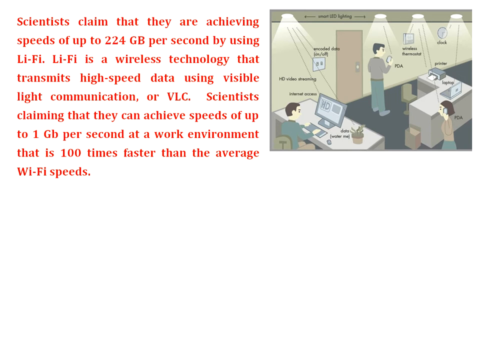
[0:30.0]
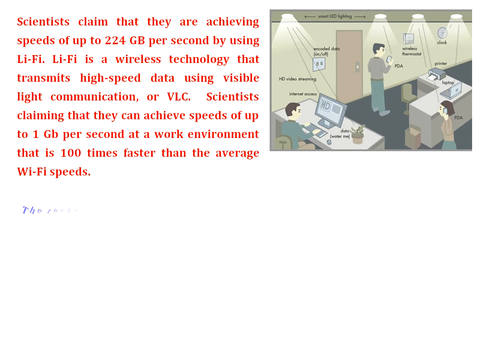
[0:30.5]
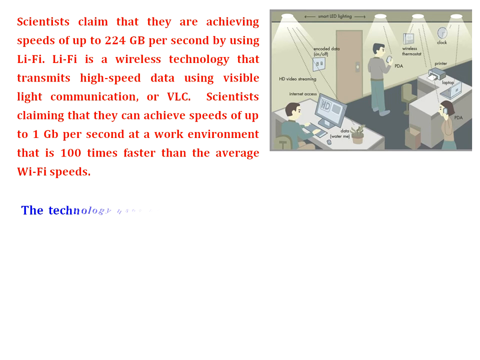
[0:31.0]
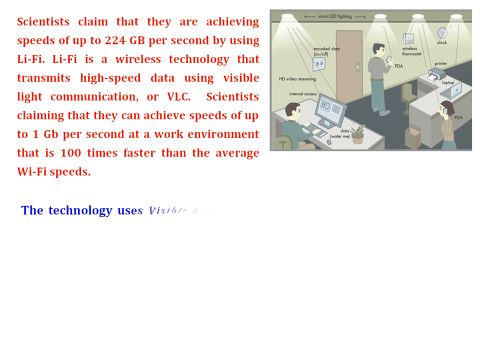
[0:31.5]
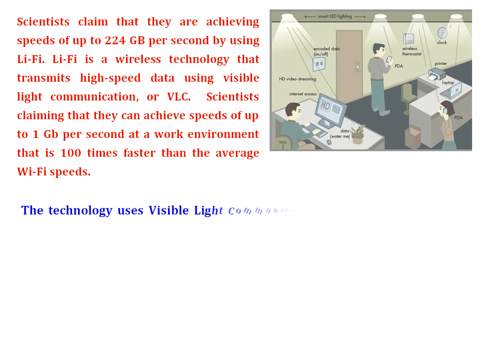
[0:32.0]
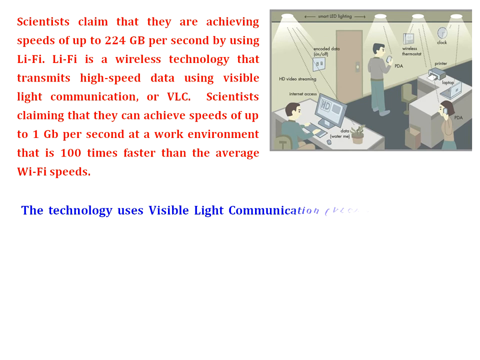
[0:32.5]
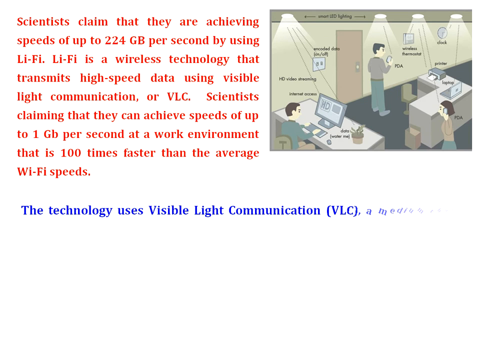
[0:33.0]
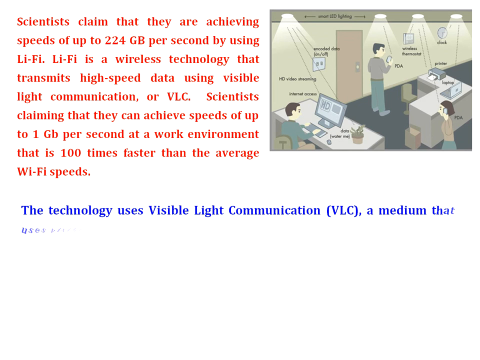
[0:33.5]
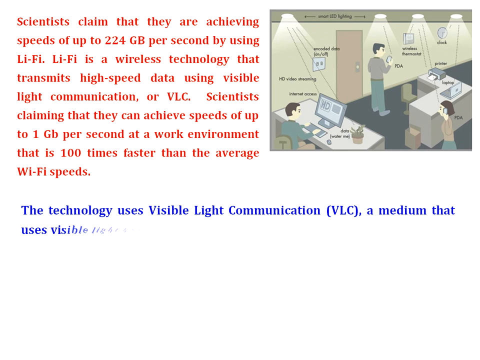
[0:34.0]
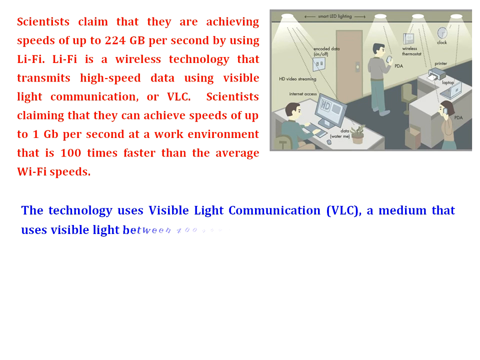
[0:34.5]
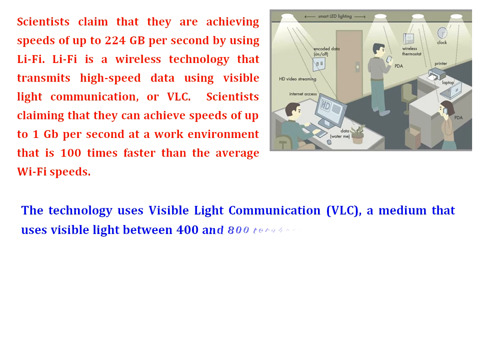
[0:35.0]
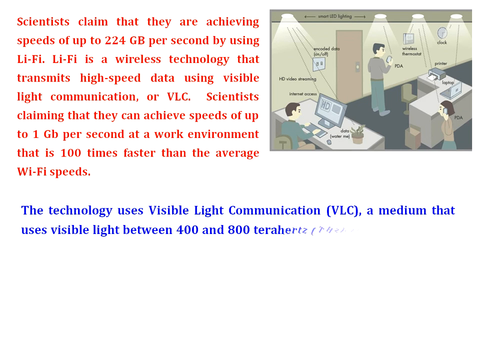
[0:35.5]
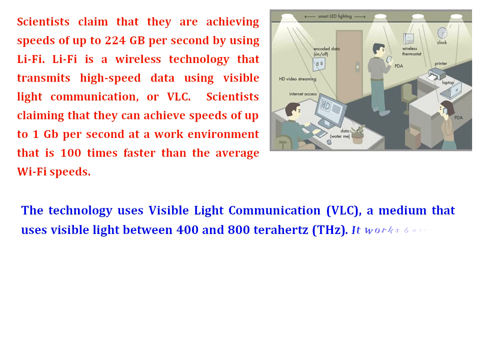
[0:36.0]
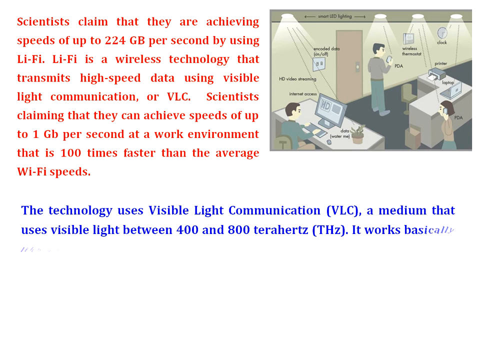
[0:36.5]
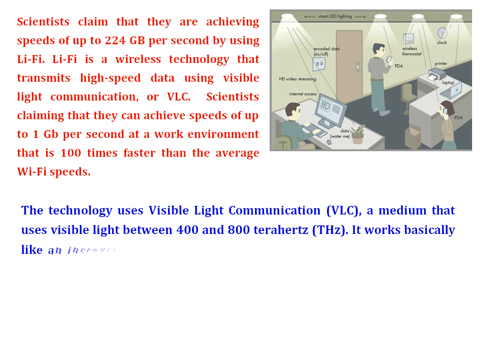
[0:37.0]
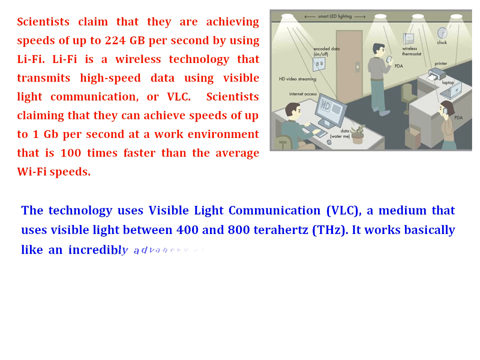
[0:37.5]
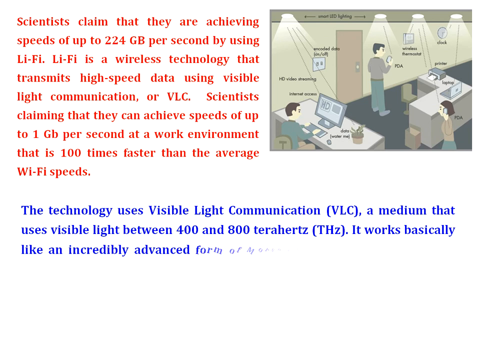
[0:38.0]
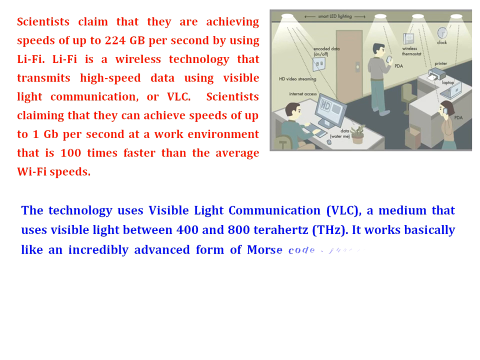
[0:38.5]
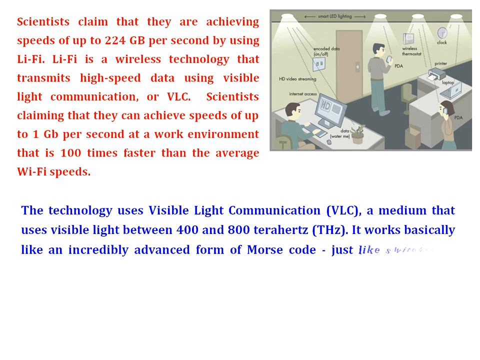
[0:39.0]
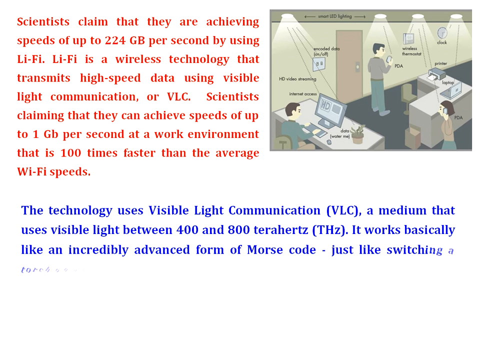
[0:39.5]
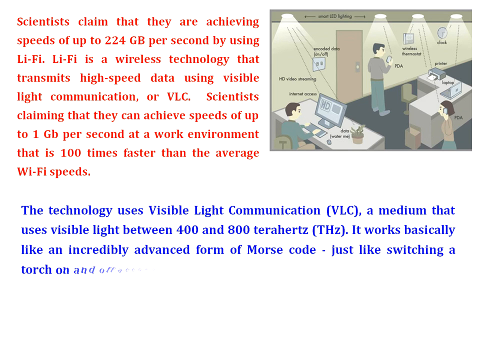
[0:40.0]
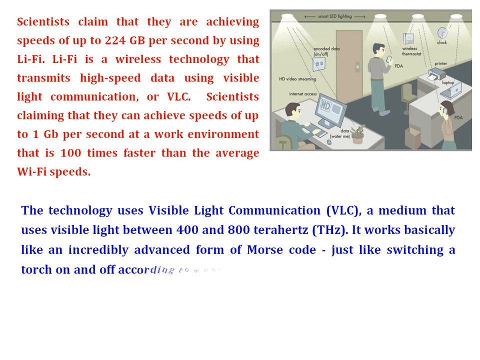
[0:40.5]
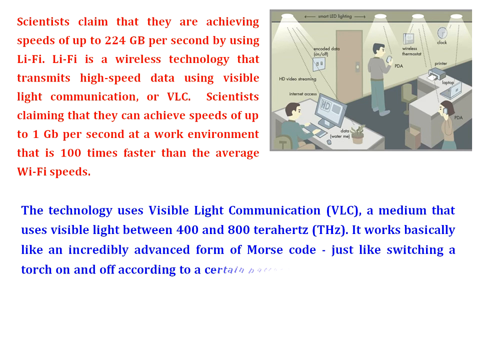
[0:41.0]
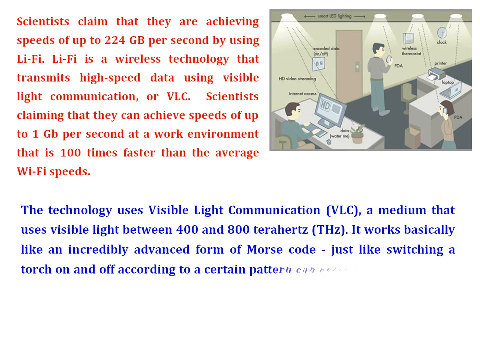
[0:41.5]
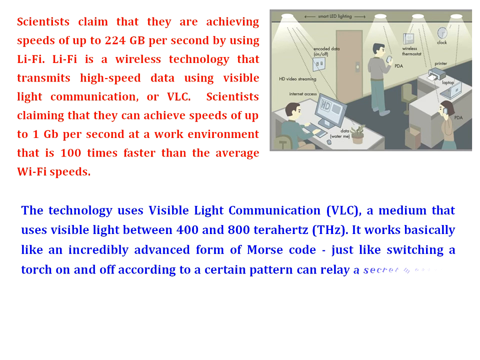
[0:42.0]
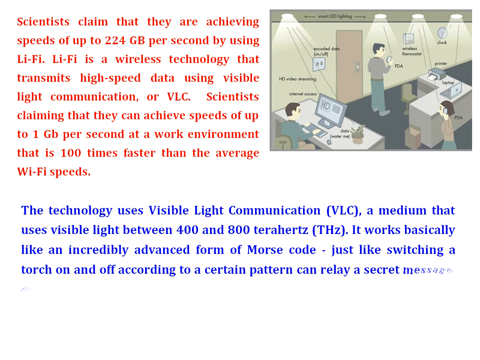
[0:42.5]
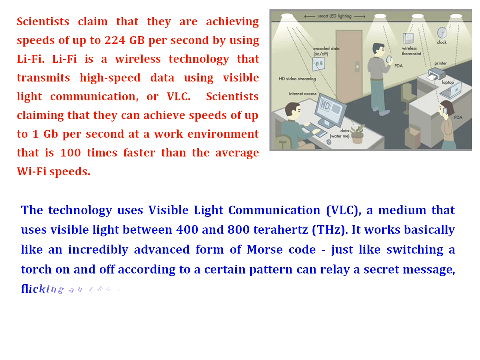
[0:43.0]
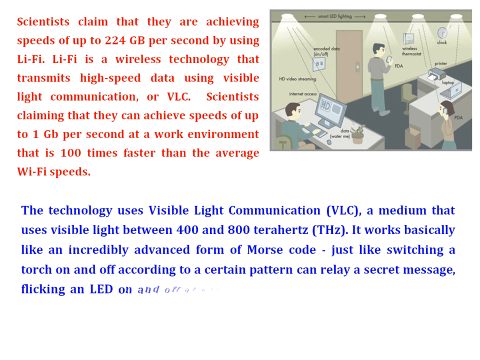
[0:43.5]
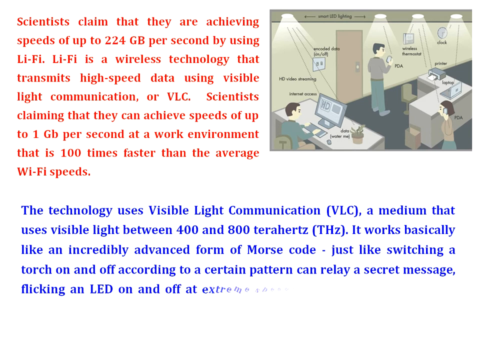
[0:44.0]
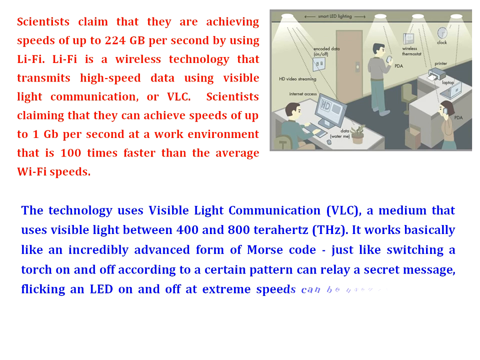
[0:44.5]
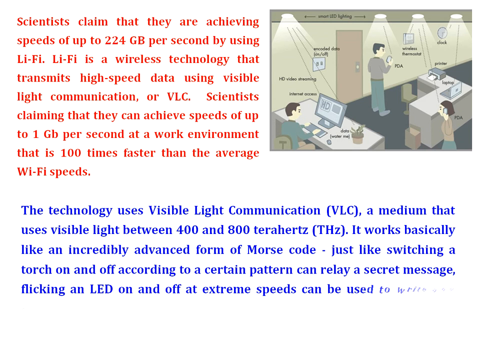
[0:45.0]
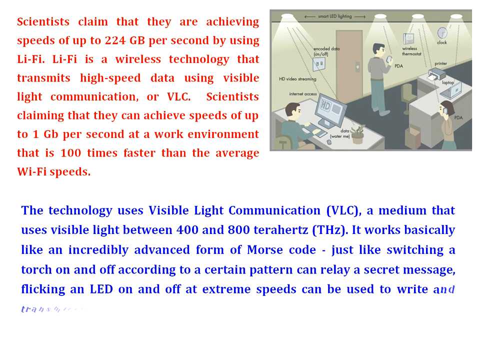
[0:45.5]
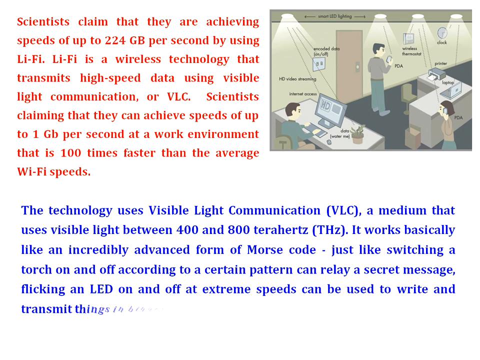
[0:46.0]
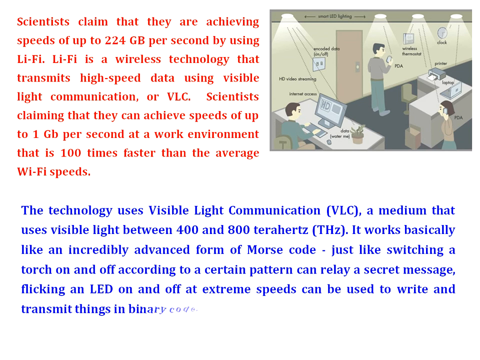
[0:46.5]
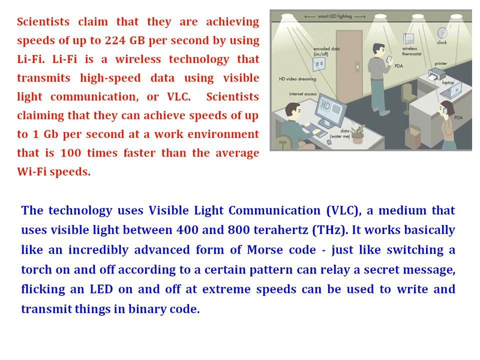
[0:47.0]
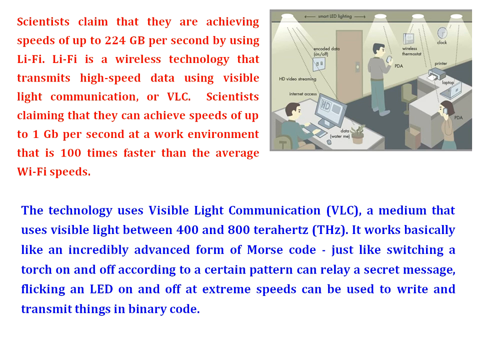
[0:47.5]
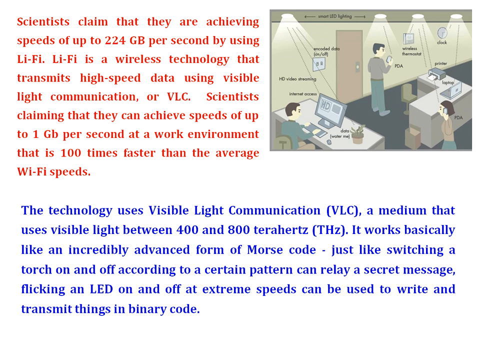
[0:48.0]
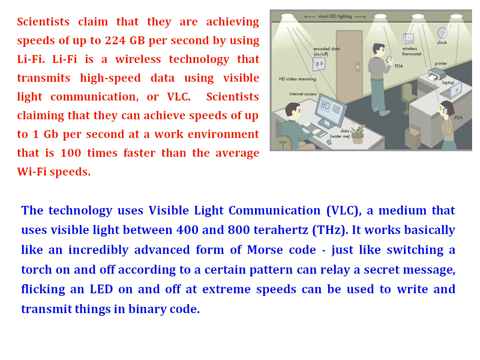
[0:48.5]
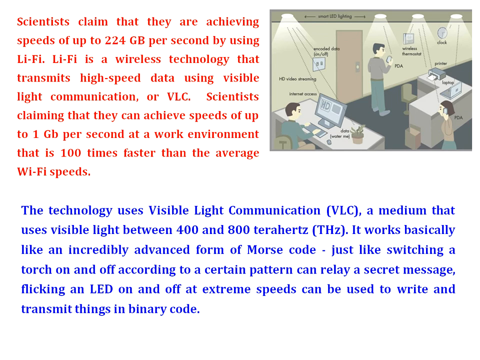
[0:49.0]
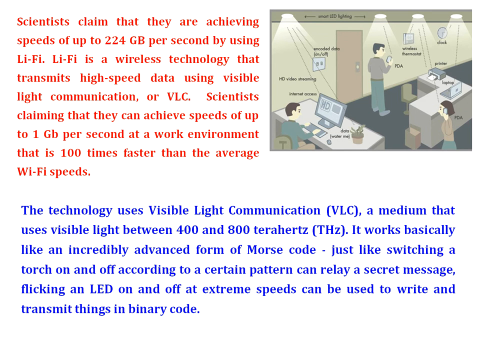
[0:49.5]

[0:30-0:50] Male and female cartoon-like people are in what seems to be an office-like workspace, with one male sitting in front of a computer. They are maybe wearing green tops with green bottoms. There is a light, a desk and a towel.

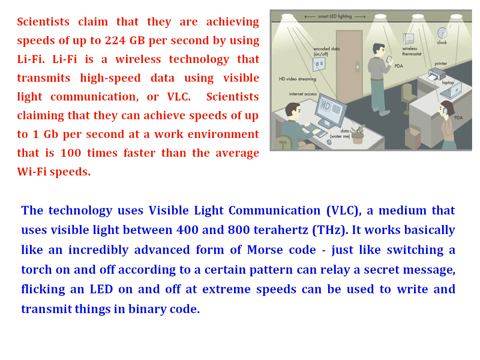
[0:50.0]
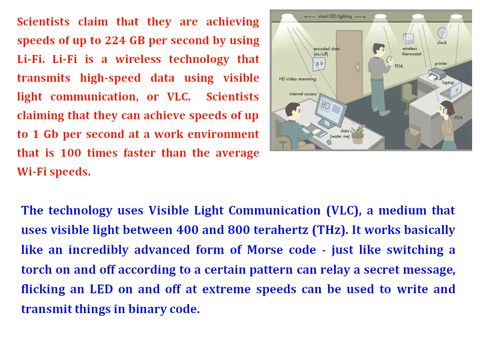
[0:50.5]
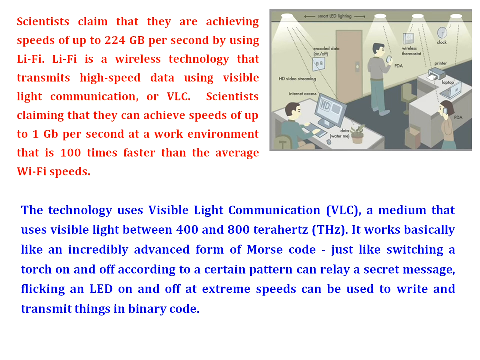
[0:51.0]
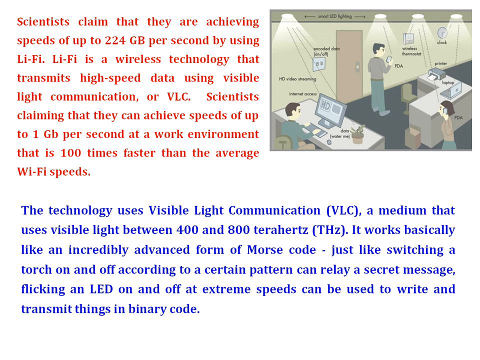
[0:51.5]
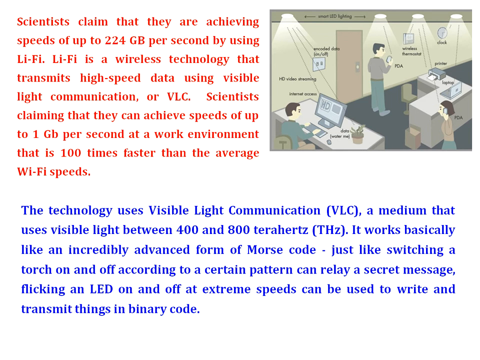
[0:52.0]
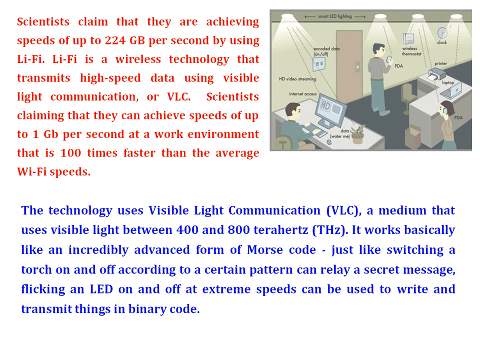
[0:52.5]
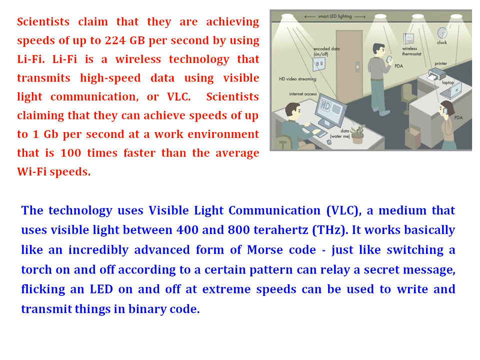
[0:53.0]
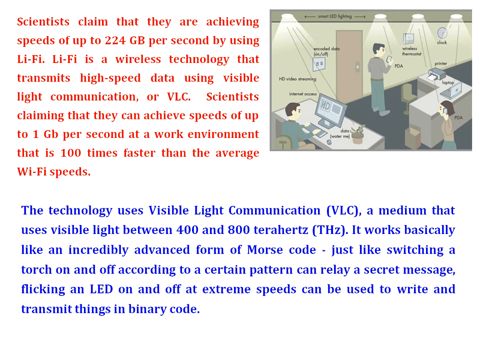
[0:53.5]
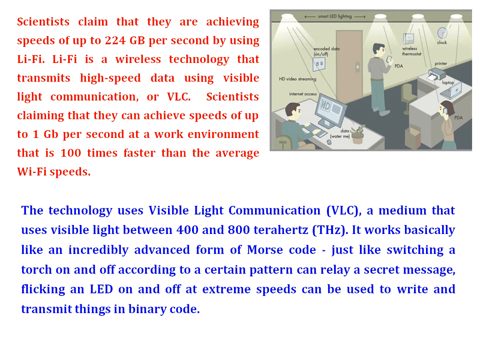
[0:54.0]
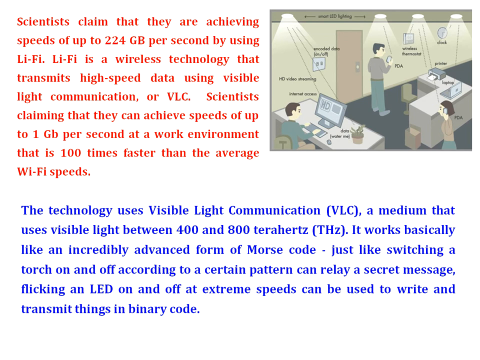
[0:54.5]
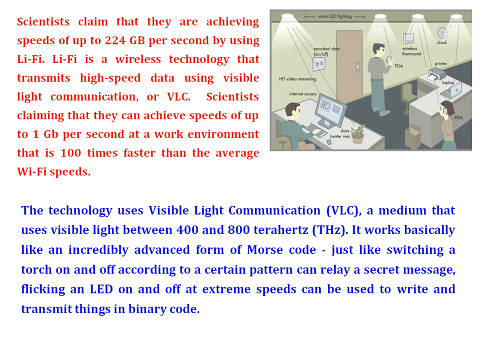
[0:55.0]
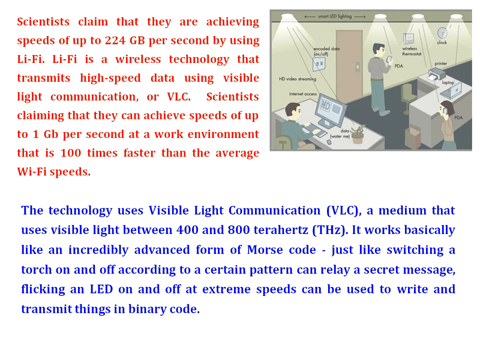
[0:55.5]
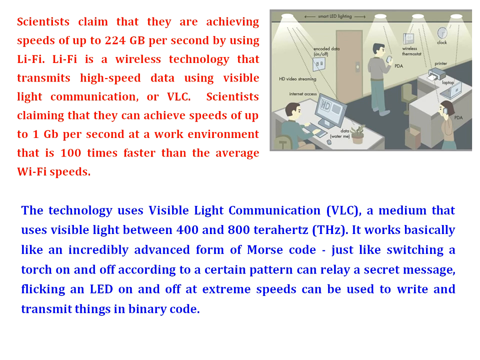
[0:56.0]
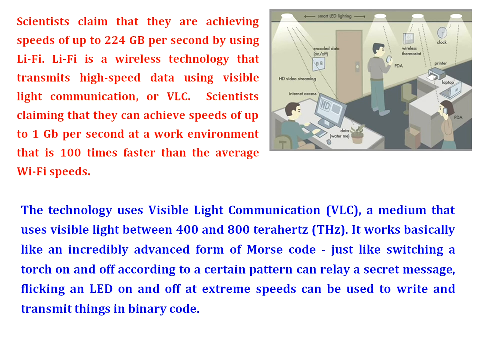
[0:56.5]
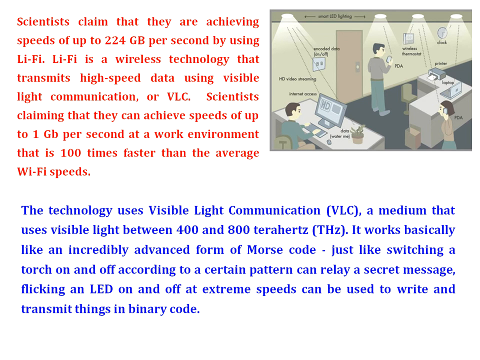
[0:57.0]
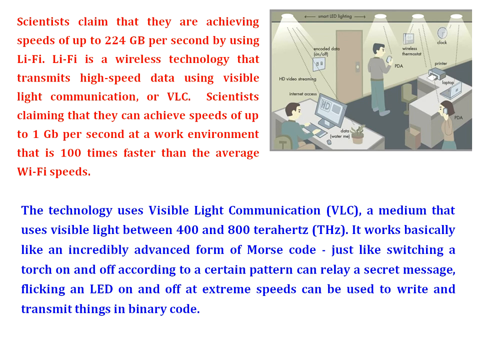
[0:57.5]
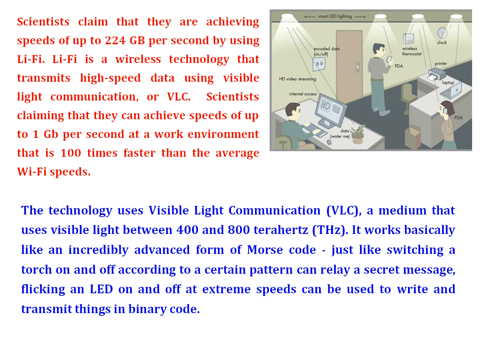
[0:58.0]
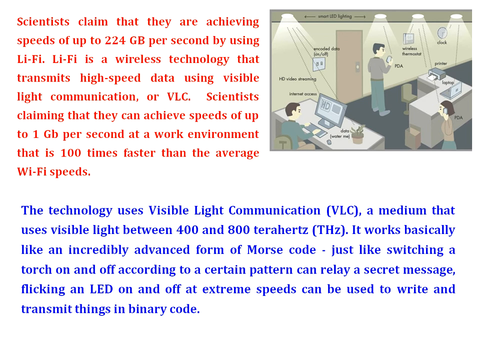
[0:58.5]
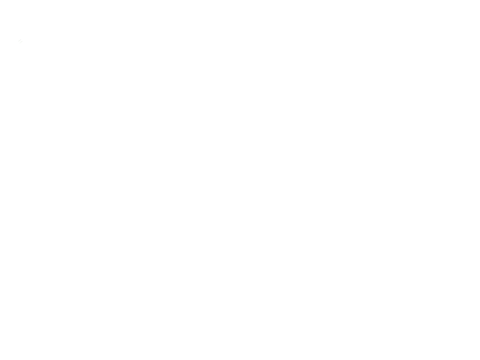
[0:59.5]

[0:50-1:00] Two men and one female are in the space, with one male working at a computer. There are tables, a spoon, chairs and flowers.